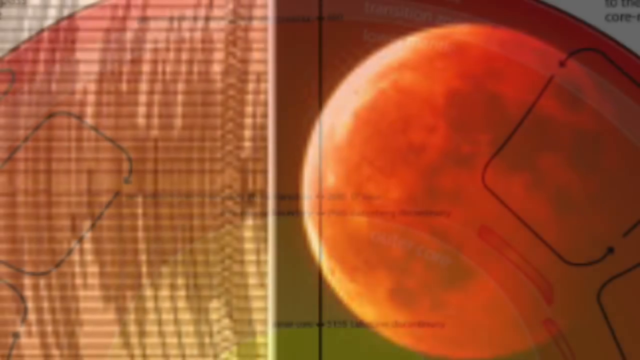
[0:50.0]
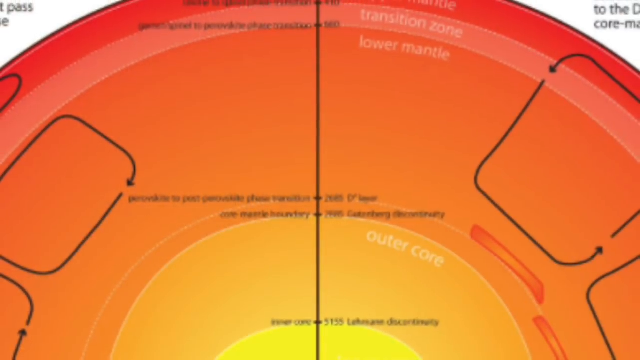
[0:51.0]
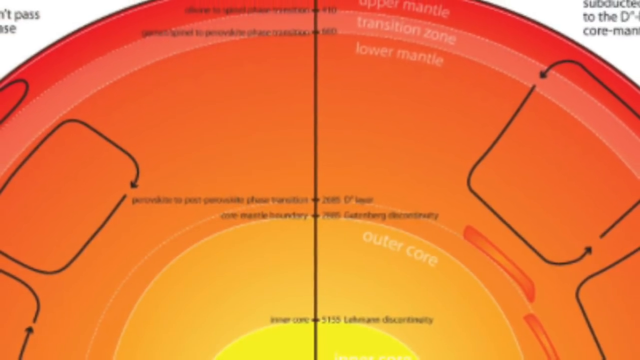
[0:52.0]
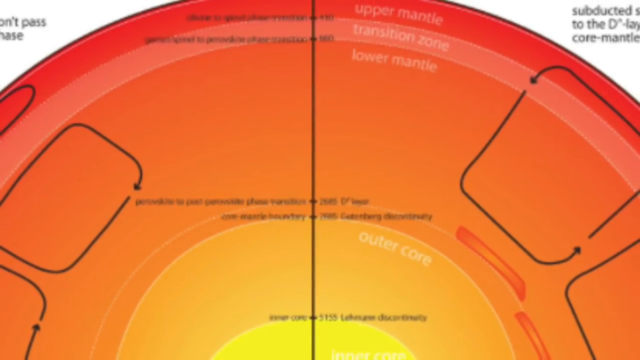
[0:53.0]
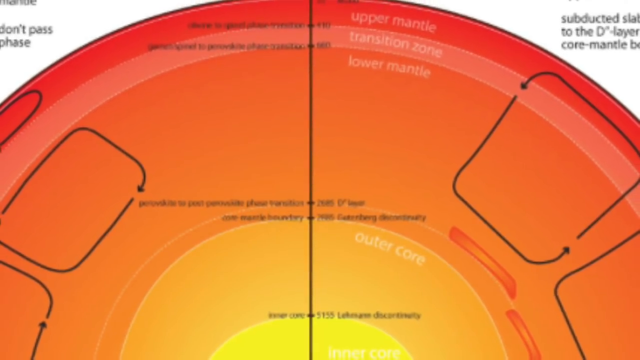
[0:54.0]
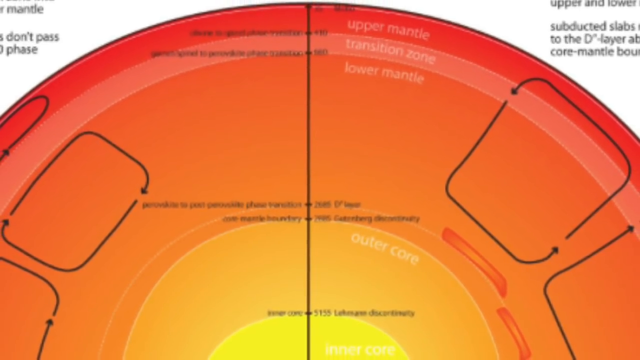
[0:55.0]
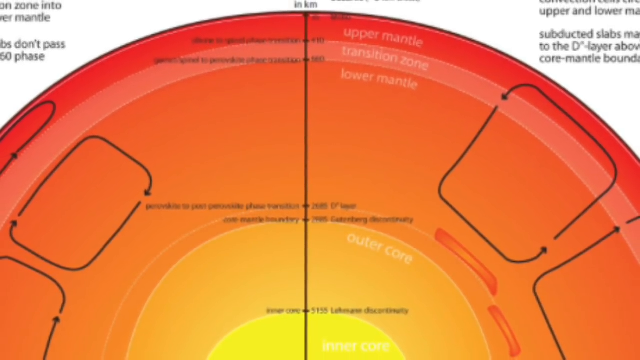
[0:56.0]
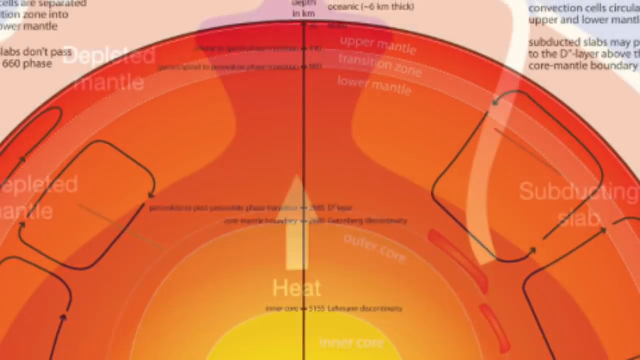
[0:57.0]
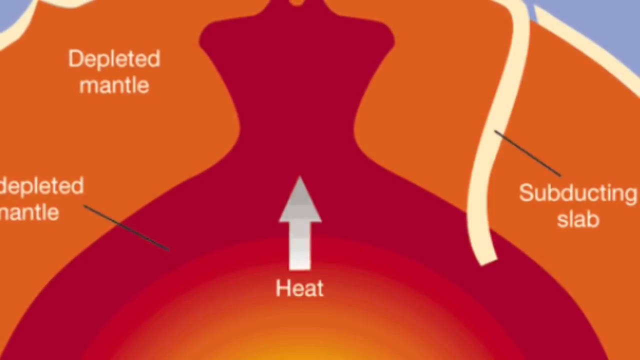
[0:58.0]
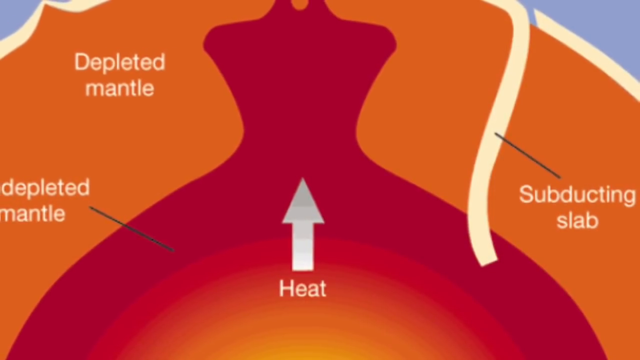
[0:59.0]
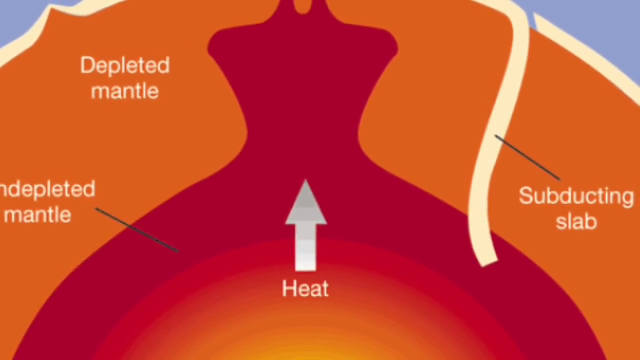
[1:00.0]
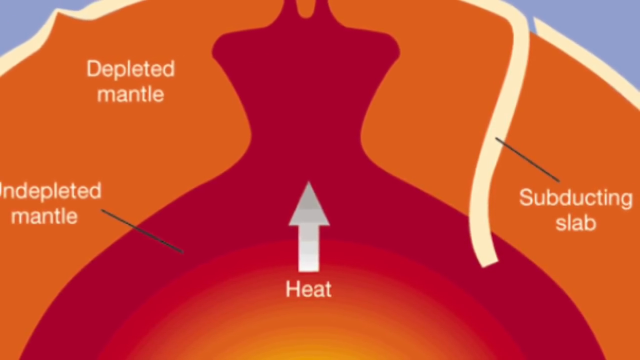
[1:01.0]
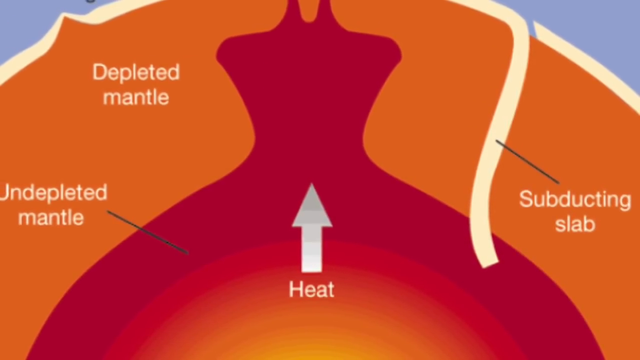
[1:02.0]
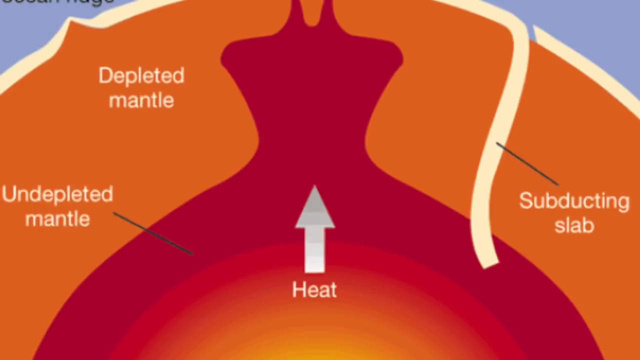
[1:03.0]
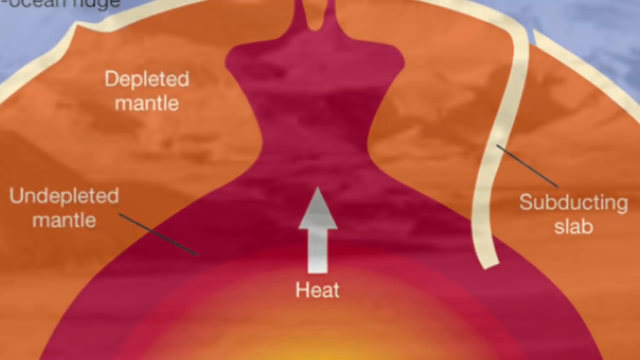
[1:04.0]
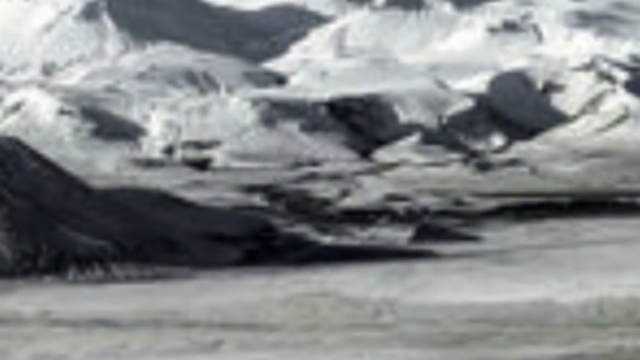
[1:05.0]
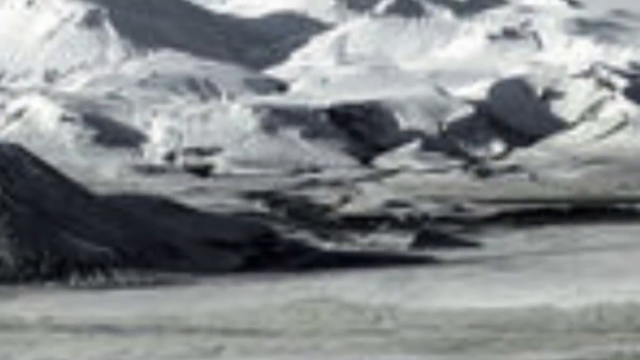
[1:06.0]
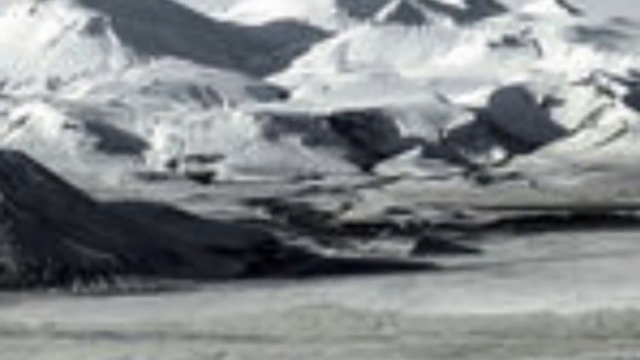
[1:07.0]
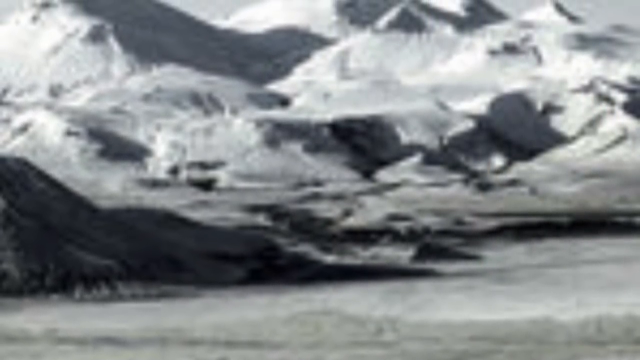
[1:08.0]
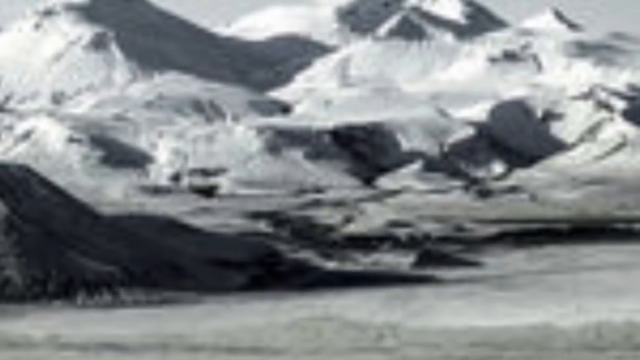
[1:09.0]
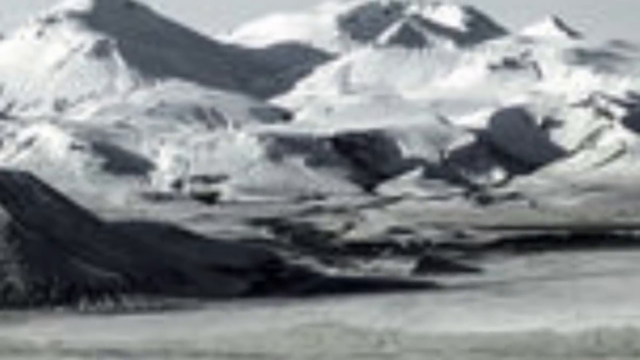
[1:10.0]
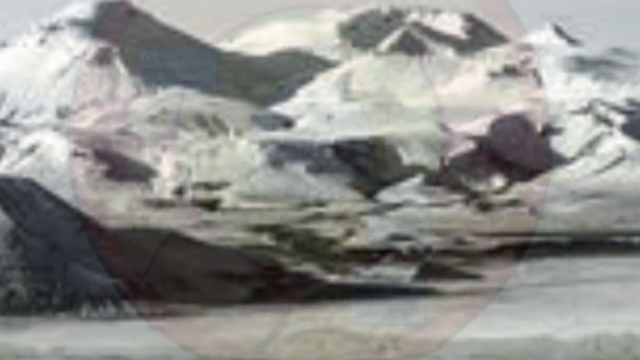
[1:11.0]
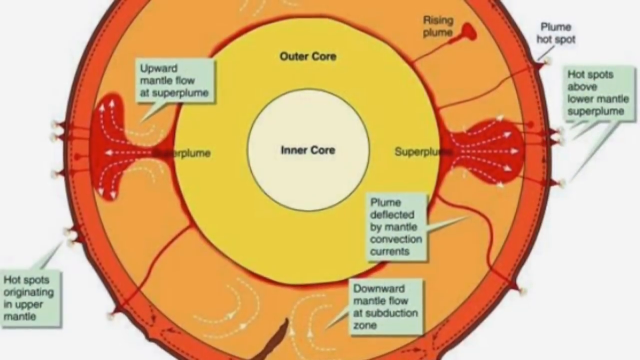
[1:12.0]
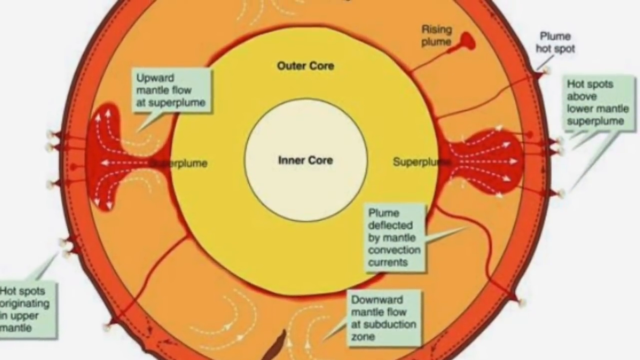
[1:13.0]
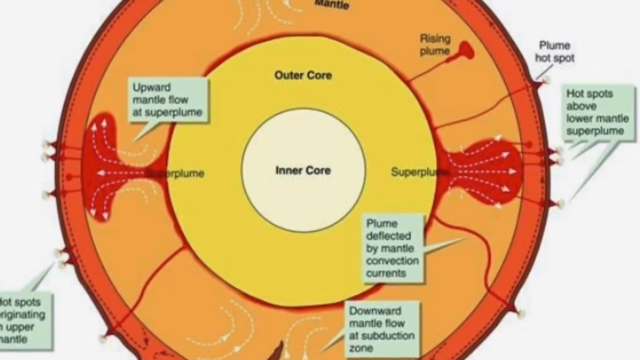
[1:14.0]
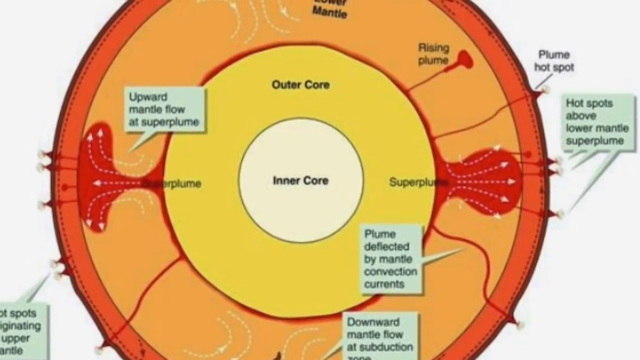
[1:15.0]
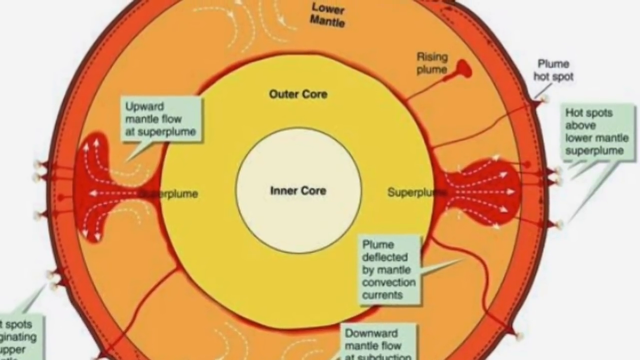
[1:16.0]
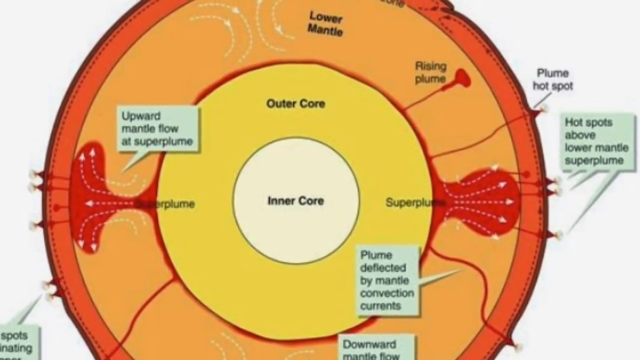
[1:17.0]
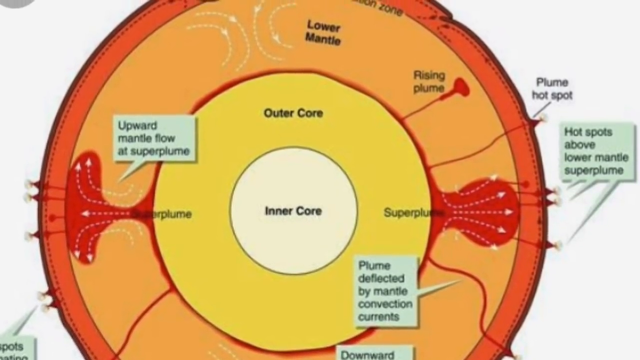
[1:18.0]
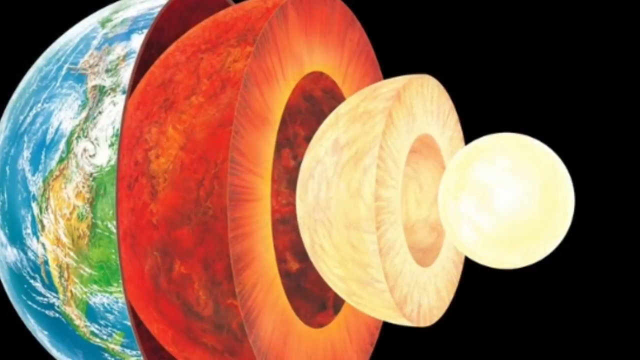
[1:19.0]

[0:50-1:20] The earth at the mantle crest is shown again, followed by a circular diagram colored in orange. The orange outer layer is labeled "upper mantle", a lighter orange layer is labeled "transition zone", and a lower orange layer is labeled "lower mantle". From the middle, a line goes straight down. In the light transition zone an arrow goes in, then there is a break, and a black line arrow goes down and around close to the core and back up; this pattern of arrows, breaks and black lines looping around repeats in several different corners of the diagram. Labels read "subducting slab", "depleted mantle" and "depleted mantle". A red center is drawn deep in, reaching into the depleted mantle area, and a white arrow pointing up is labeled "heat". By "subducting slab", a line goes down into the heat, with a line pointing to it.